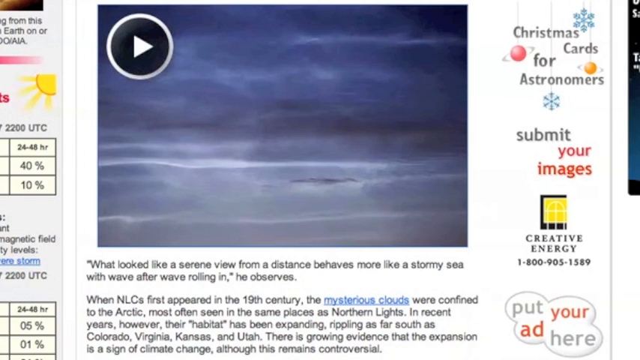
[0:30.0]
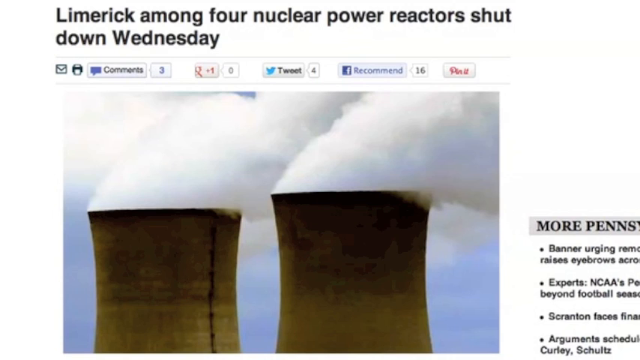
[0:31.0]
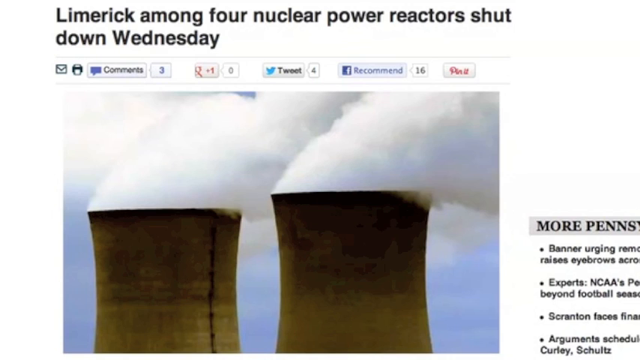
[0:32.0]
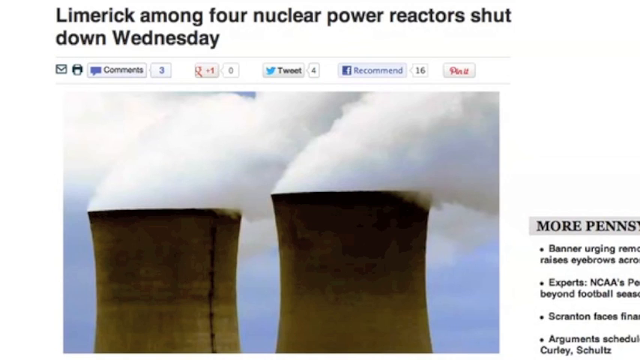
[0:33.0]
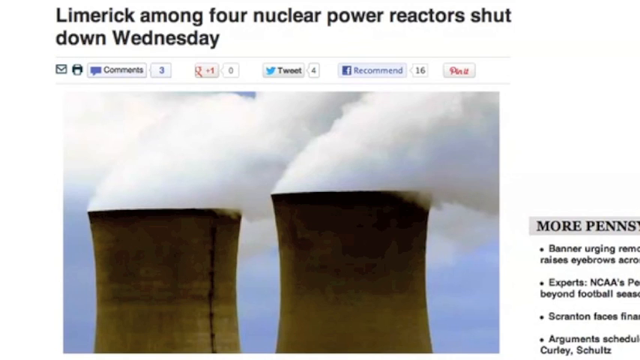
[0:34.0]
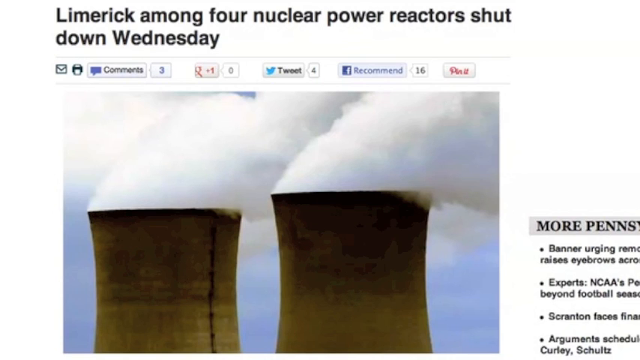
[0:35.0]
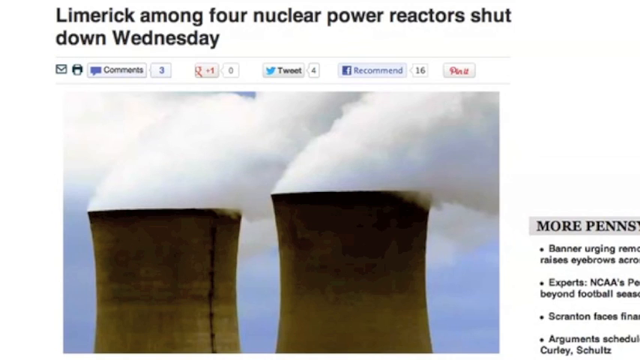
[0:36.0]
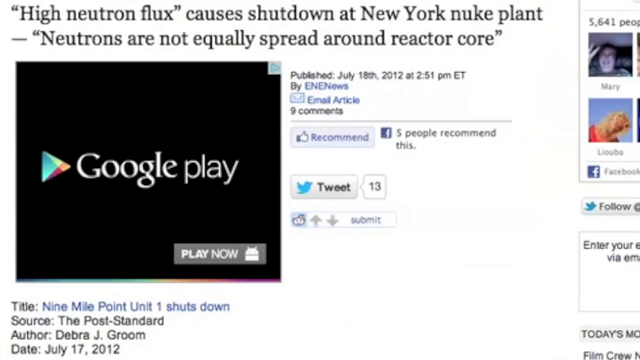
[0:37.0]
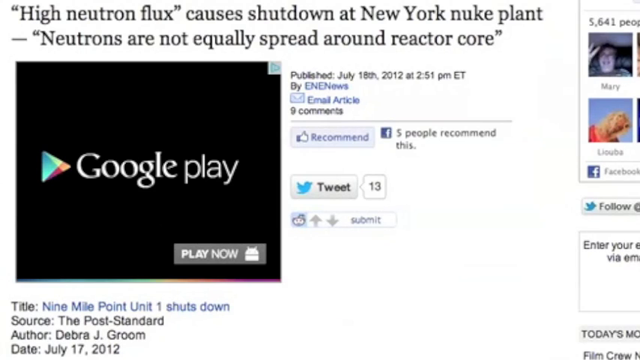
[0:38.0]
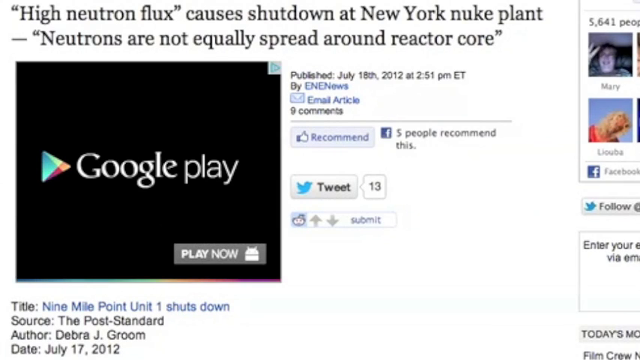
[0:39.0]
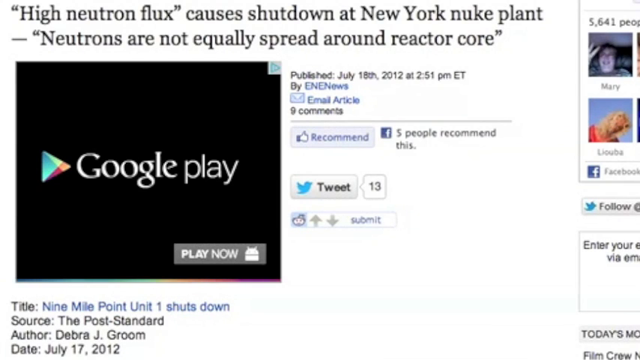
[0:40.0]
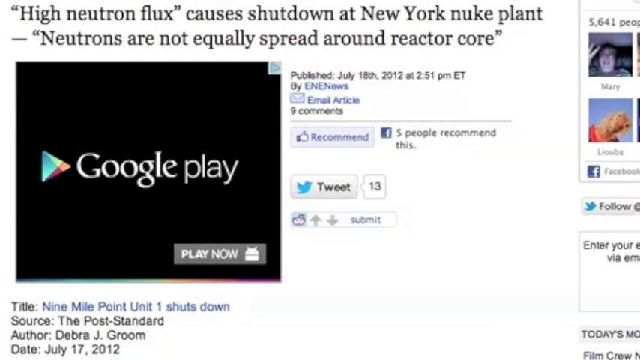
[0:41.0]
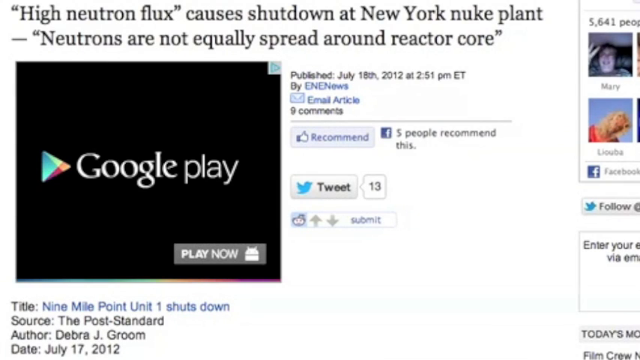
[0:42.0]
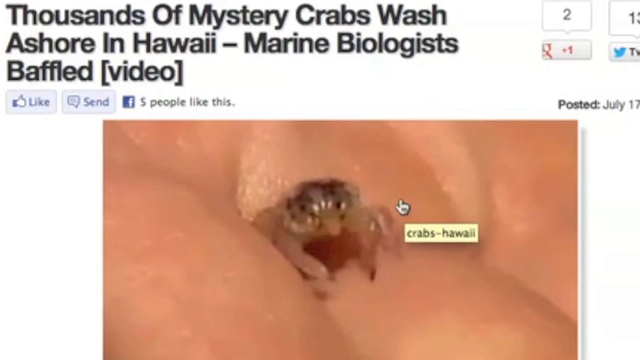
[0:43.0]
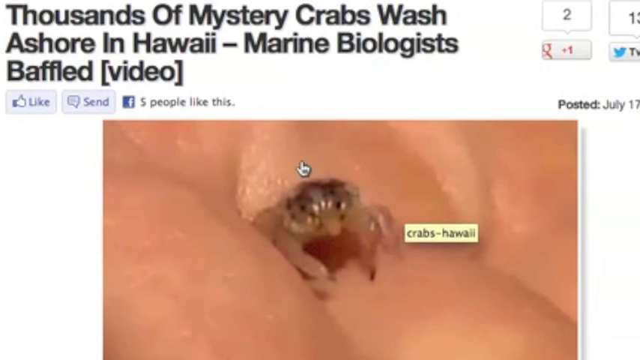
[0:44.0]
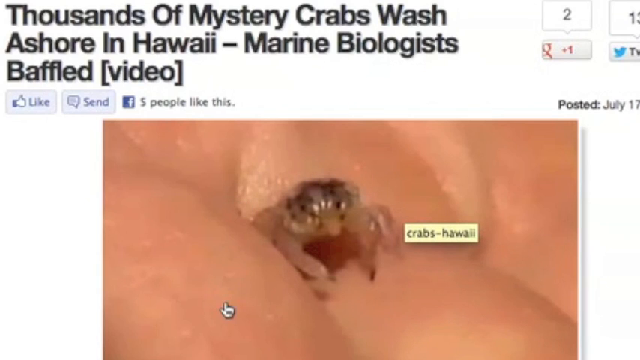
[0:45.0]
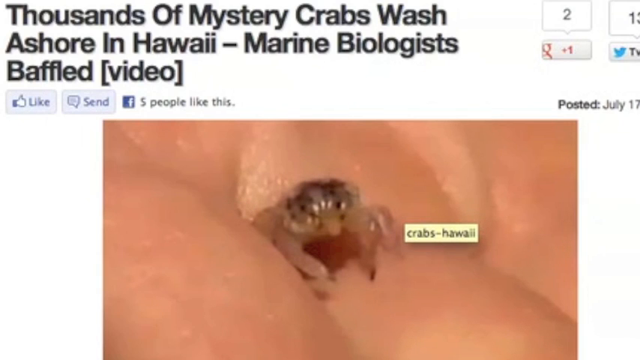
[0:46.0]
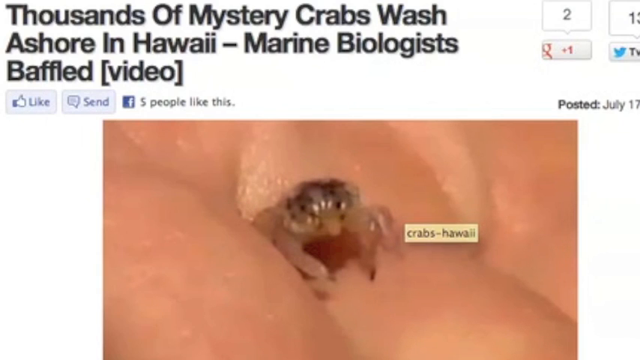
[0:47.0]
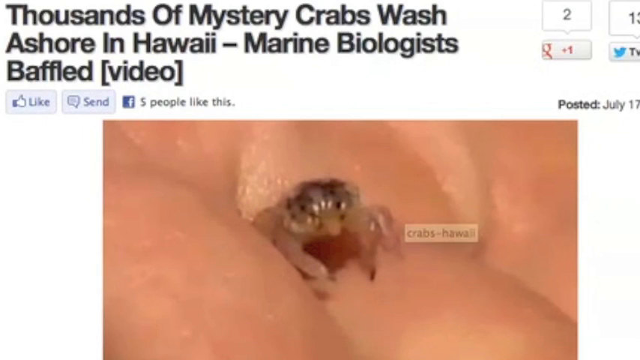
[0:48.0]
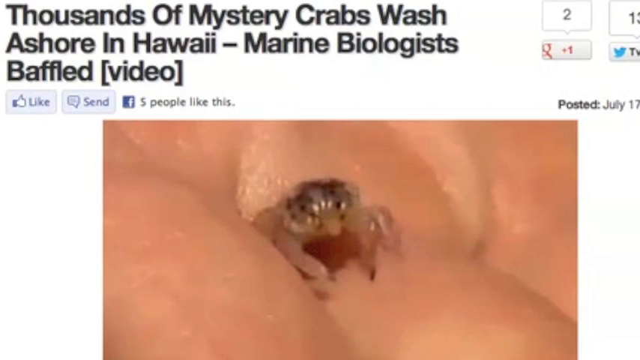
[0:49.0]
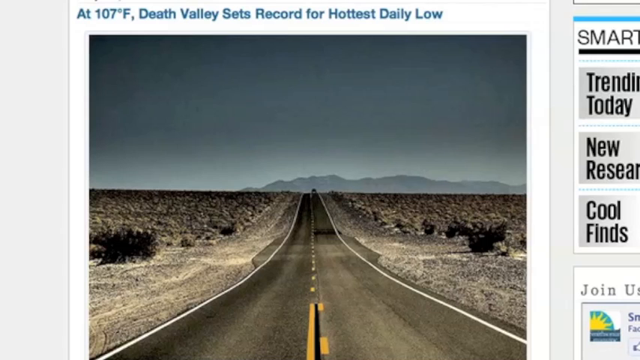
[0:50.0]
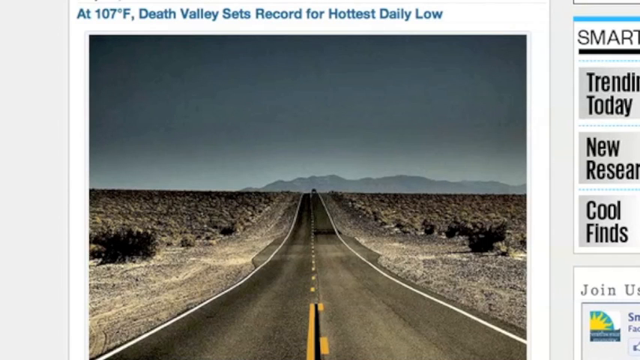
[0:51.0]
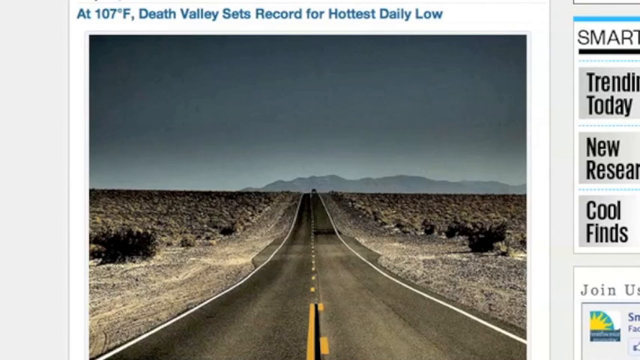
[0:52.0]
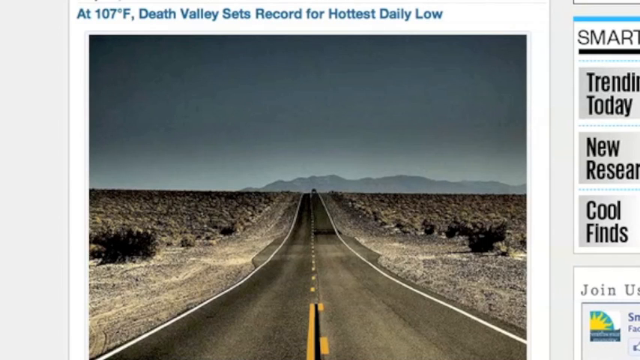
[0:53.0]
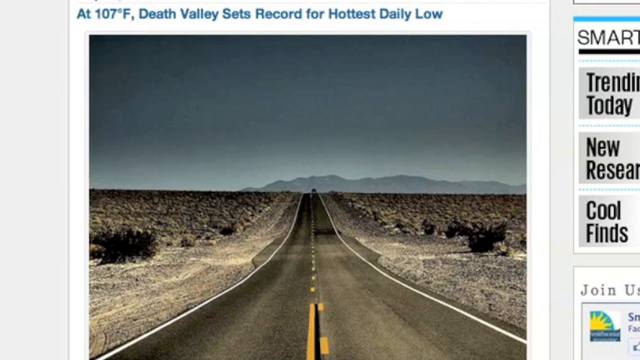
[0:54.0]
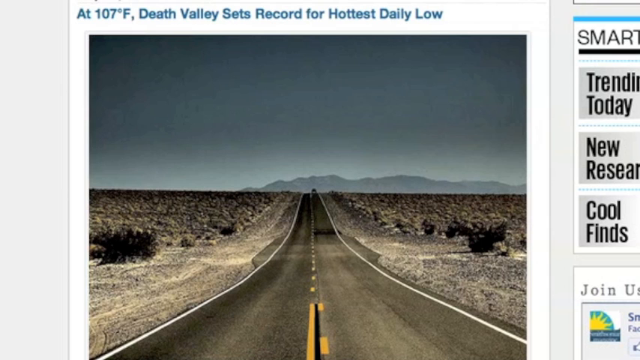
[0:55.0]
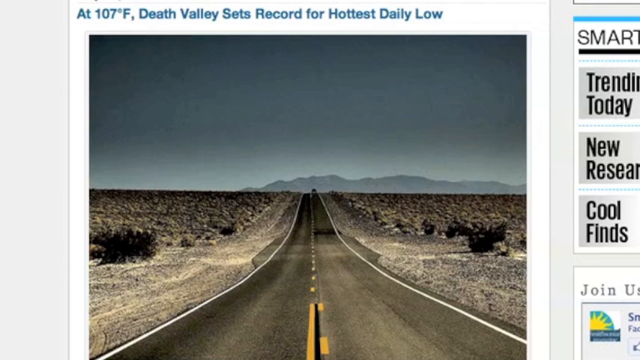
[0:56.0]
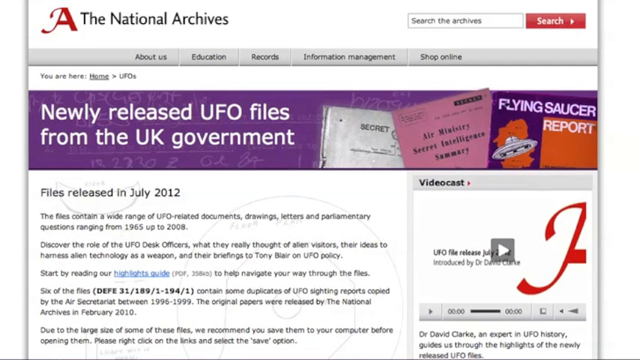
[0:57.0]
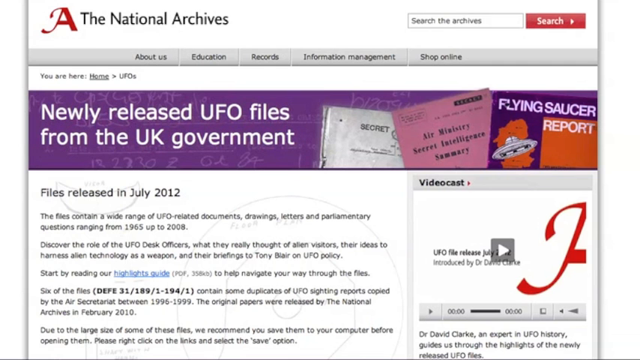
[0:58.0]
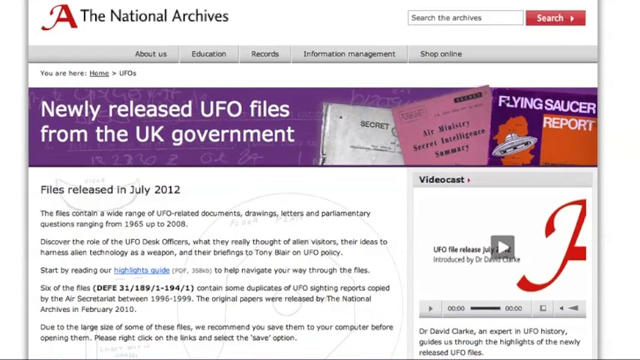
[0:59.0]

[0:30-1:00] The page looks like some kind of computer screen. On the right it reads "Christmas cards for astronomers," with ornaments and snowflakes hanging on string, in what looks like a graphic that may be an ad. Below it reads "submit your images," with "your images" written in red, and underneath that "creative energy" with a little yellow and black icon, followed by a phone number: "1-800-905-1589." In the middle of the screen is the video of the weather pattern that looks like water, with the paragraph underneath reading "what looked like a serene view from a distance behaves more like a stormy sea with wave after wave rolling in, he observes." The screen then changes to what looks like a news article reading "Limerick among four nuclear power reactors shut down Wednesday," with a graphic of two chimneys with smoke billowing out of them. It then moves to a new screen with Google Play.